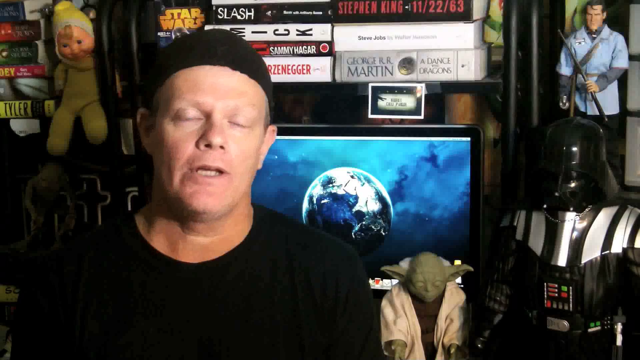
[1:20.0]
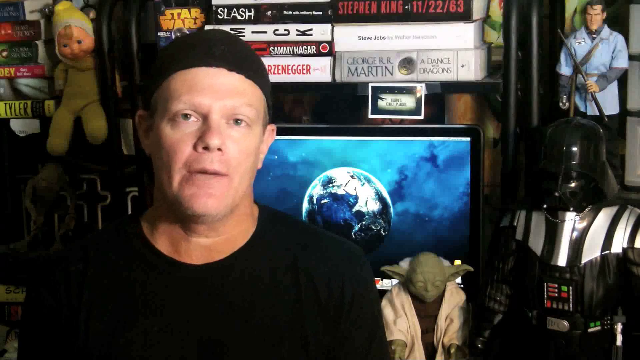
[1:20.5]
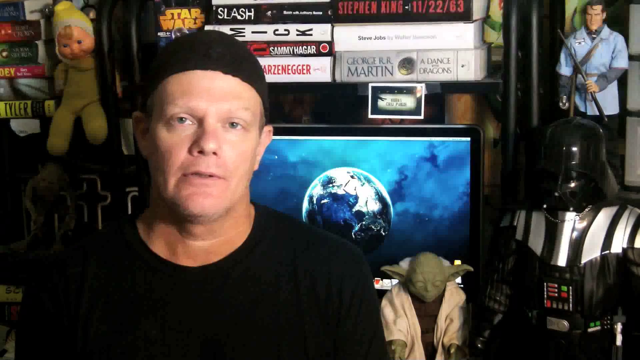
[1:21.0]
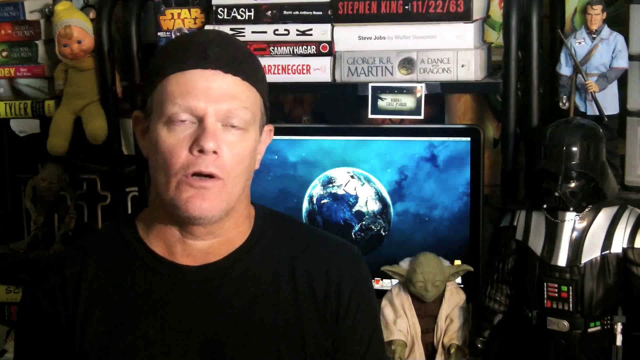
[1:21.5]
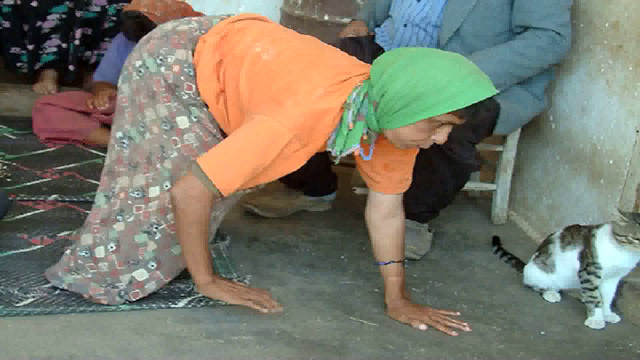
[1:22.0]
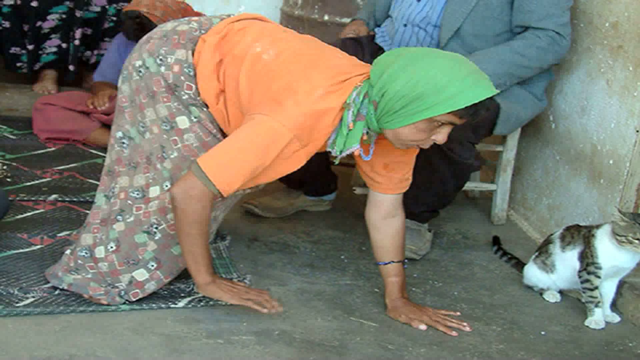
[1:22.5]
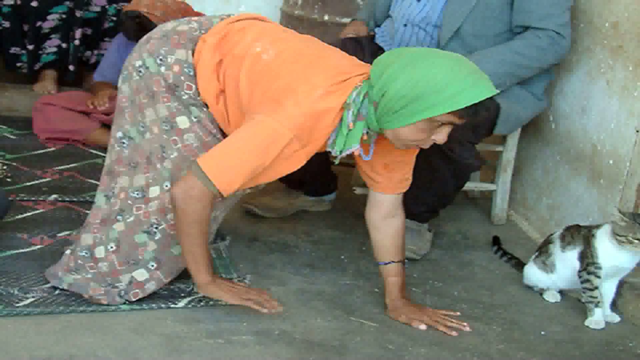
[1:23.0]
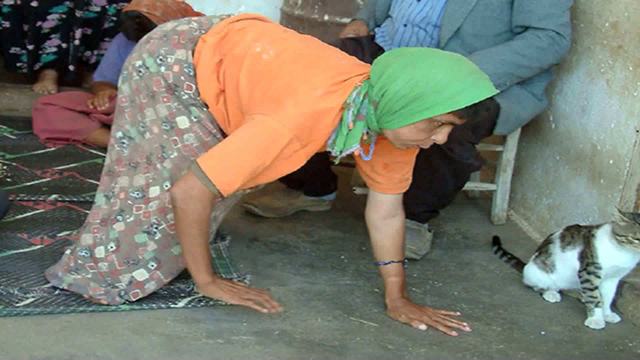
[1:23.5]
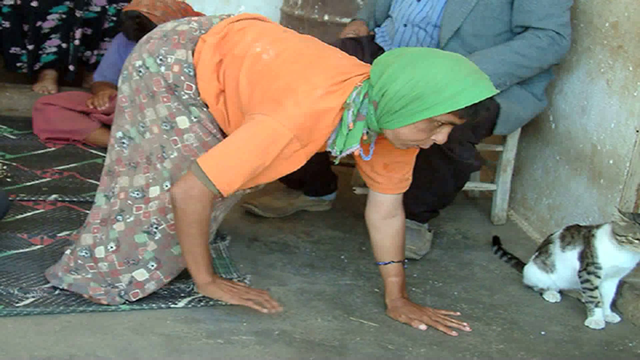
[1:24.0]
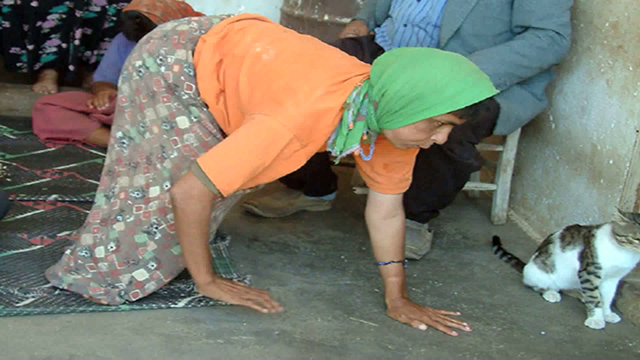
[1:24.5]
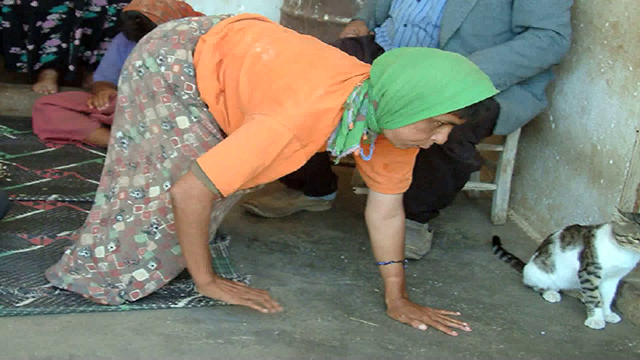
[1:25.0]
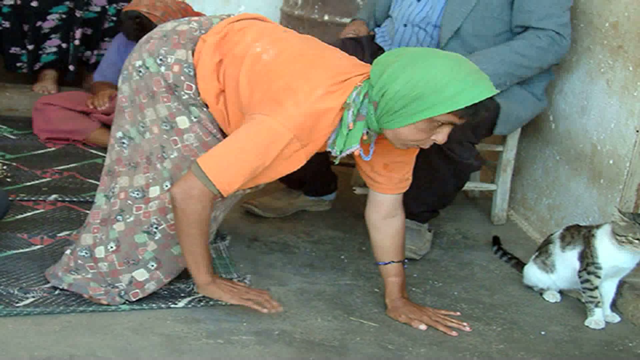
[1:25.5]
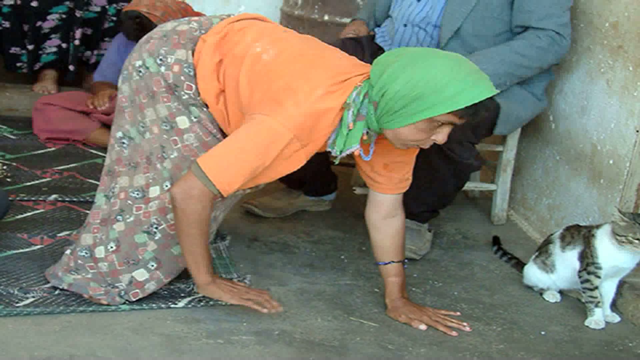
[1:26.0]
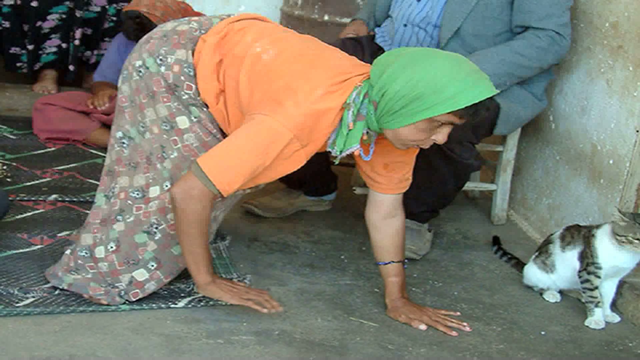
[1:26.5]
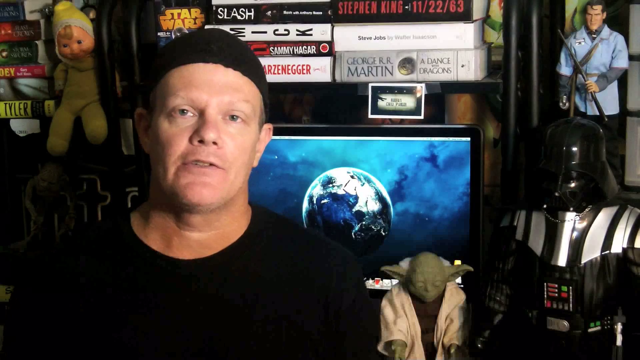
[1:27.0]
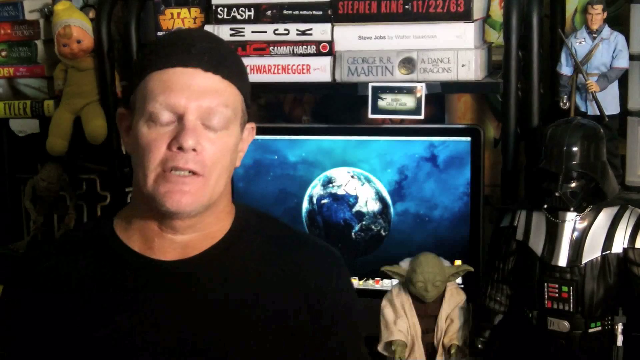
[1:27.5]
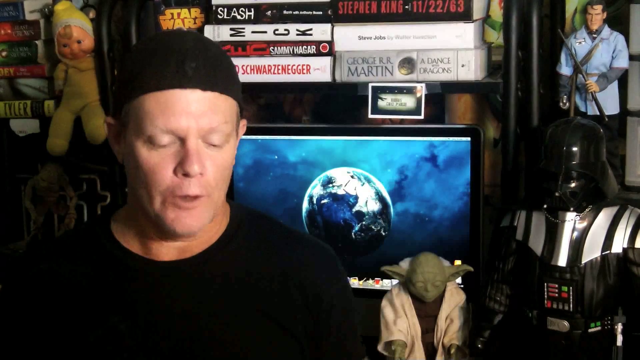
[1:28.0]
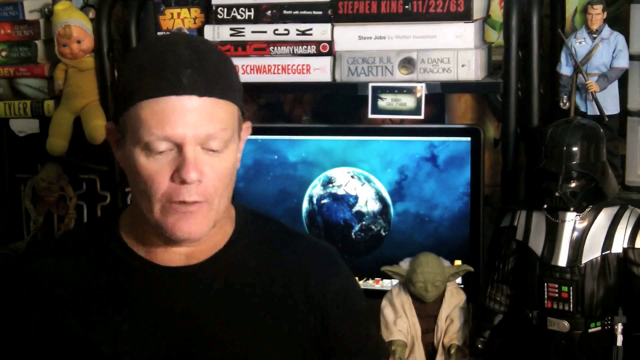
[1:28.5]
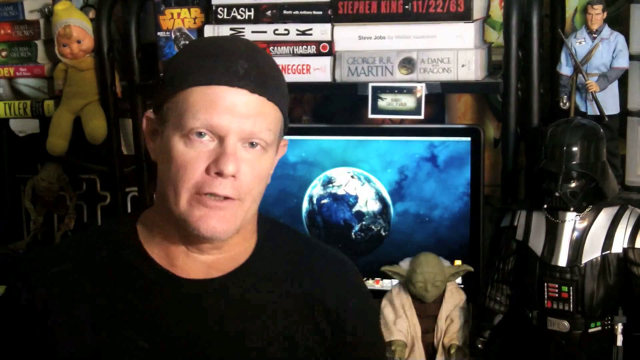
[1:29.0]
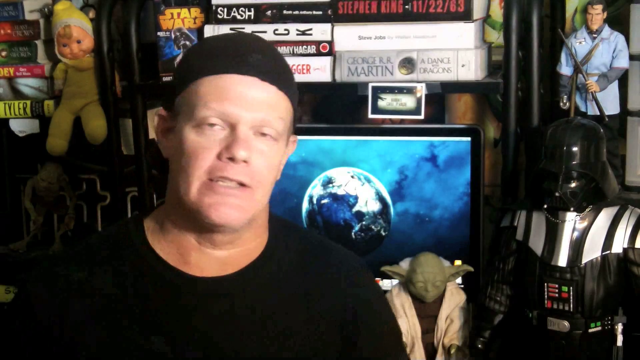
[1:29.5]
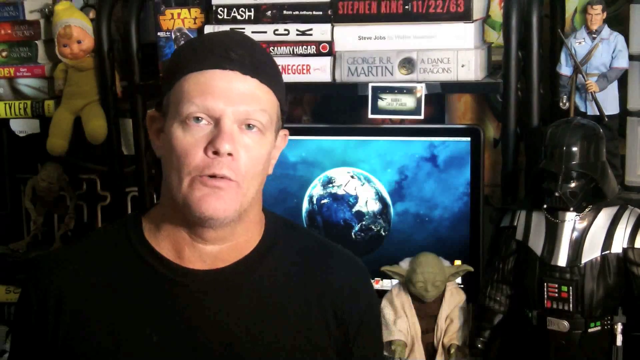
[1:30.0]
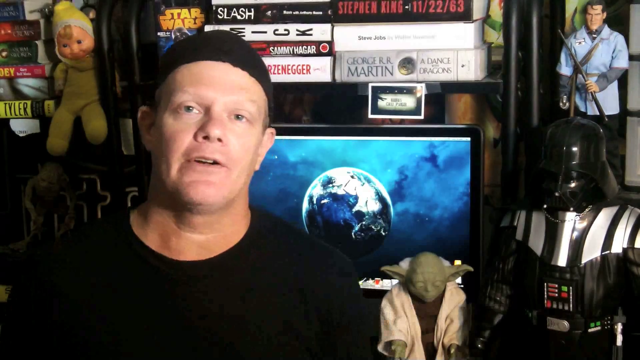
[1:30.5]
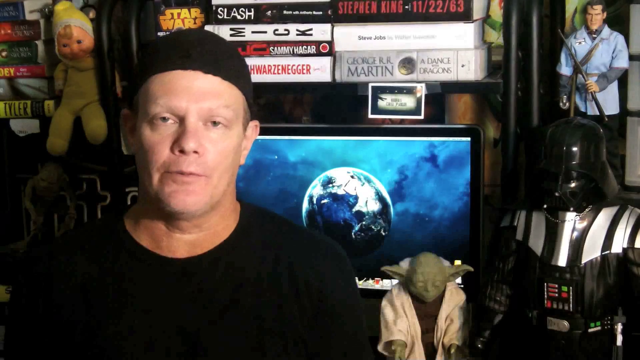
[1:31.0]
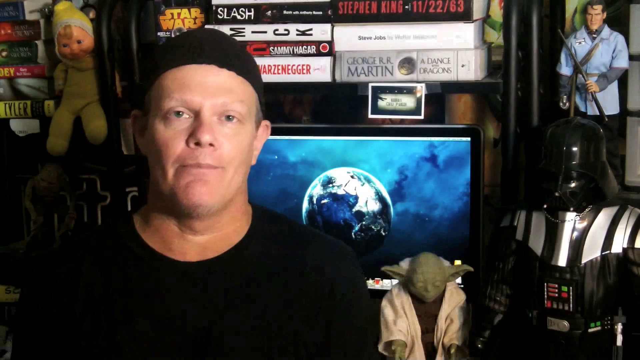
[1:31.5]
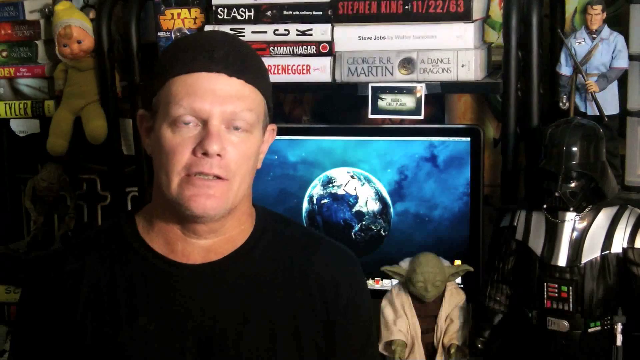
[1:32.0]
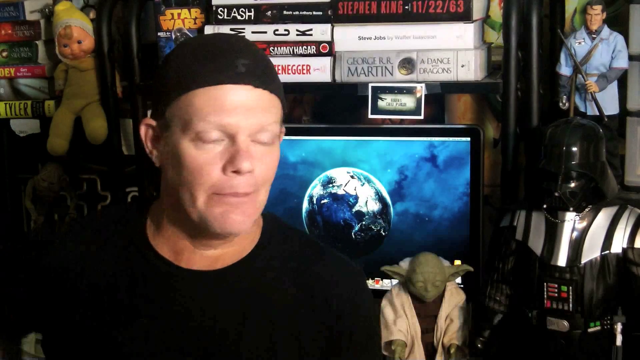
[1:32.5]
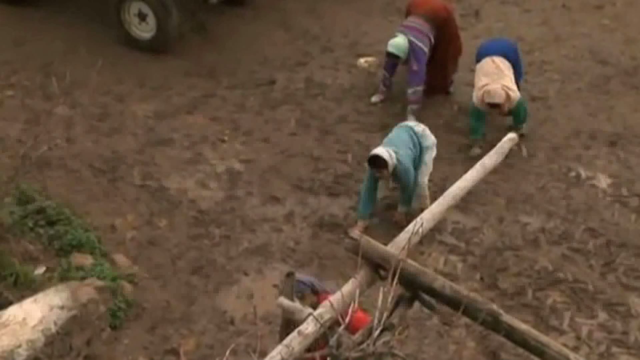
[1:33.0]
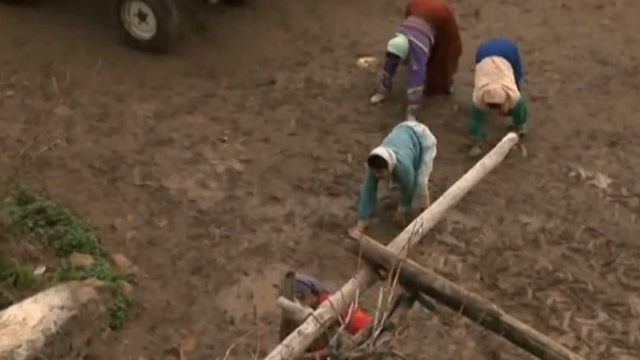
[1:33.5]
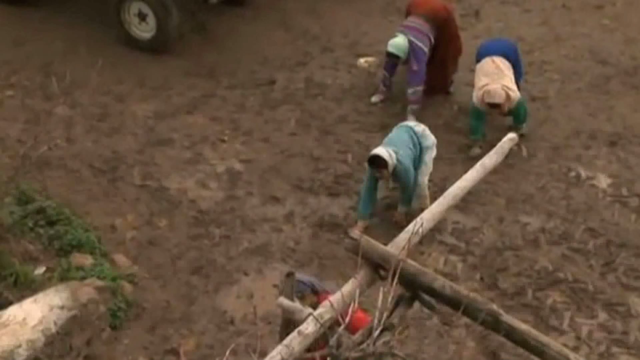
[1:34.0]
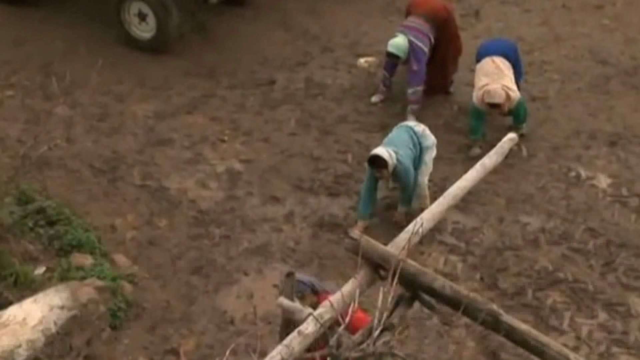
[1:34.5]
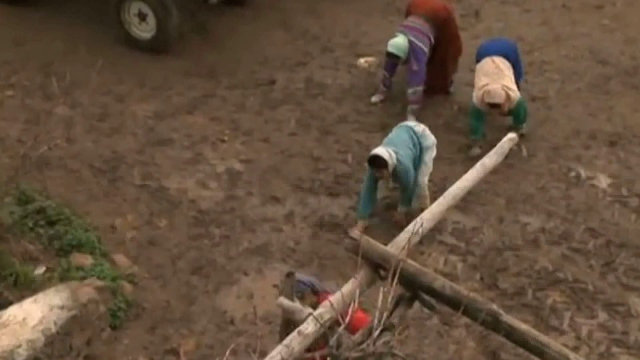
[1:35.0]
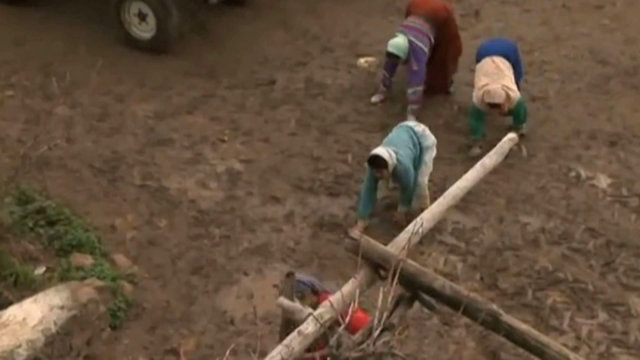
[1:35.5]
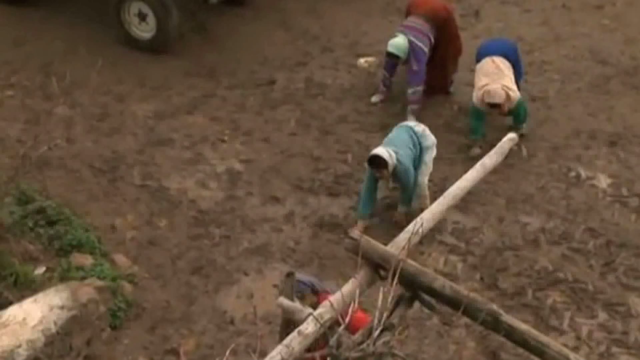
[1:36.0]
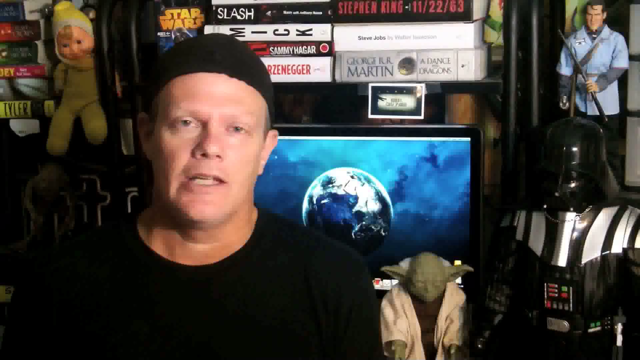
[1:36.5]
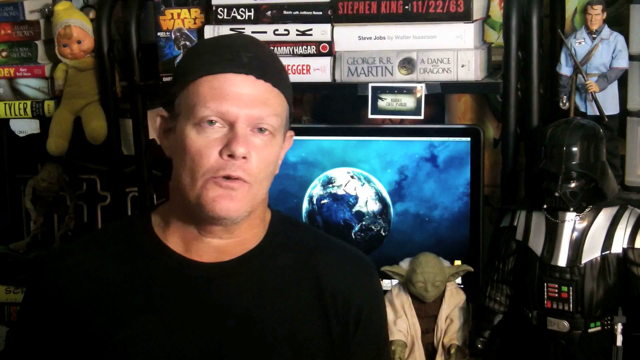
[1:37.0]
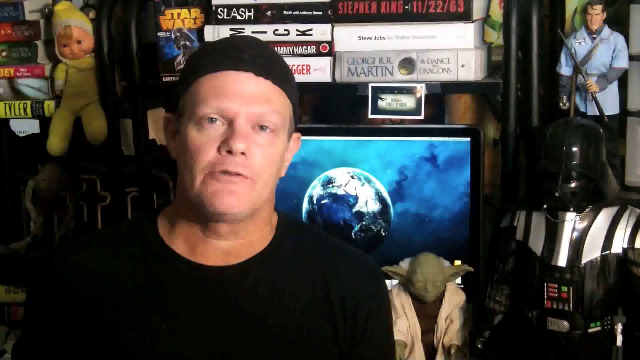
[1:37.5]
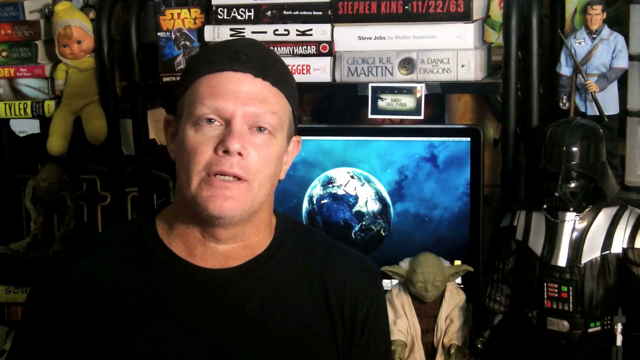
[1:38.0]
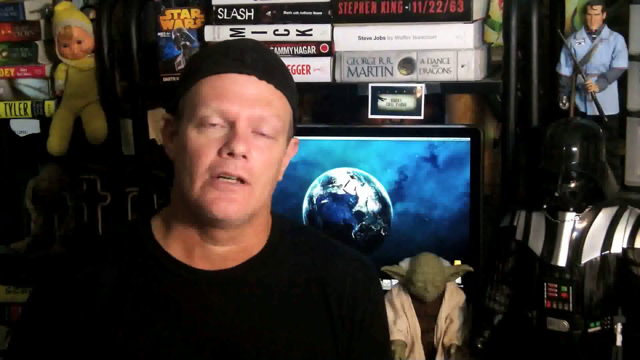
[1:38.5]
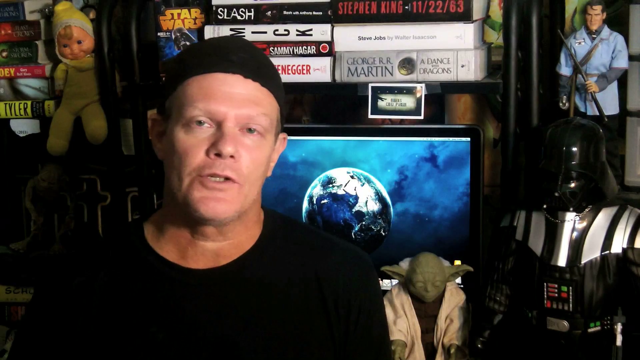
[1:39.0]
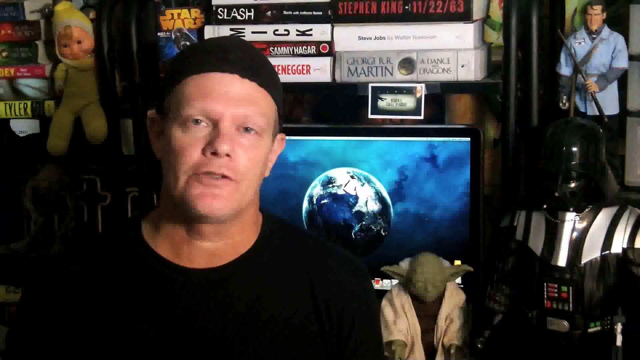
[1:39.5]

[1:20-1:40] A man is in front of a screen depicting the earth, with a Darth Vader on the right side, a toy on the left, a yellow figurine and some books behind him. After some time the man speaks; he has no beard or mustache and wears a black outfit. A woman is on the ground on her hands with a cat in front of her, while other people sit on chairs. Three other people walk on their hands, and the man commentates on it. Other people walk by without using their legs, and some of them wear yellow outfits.